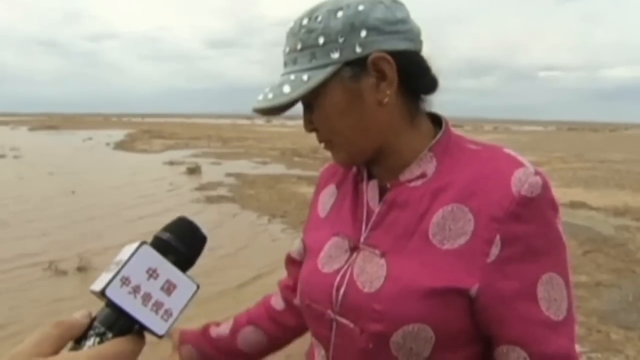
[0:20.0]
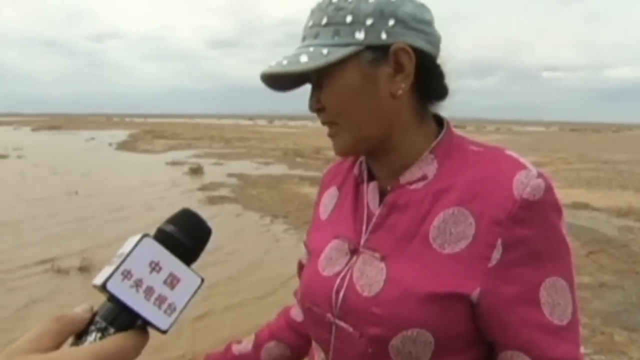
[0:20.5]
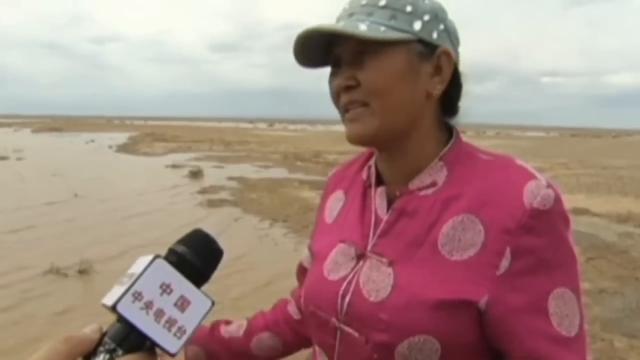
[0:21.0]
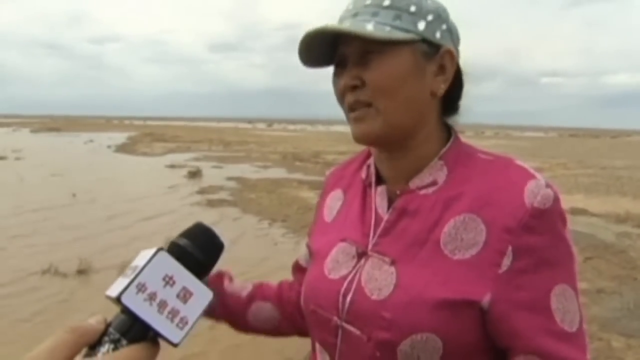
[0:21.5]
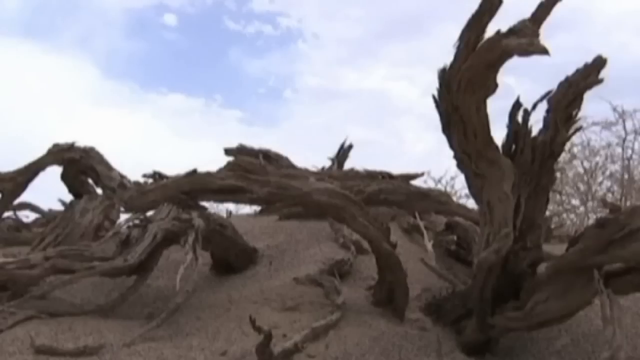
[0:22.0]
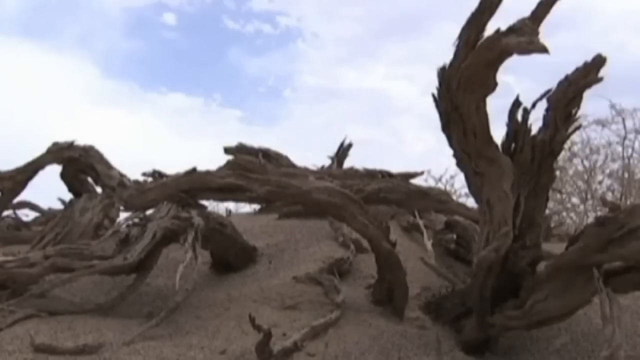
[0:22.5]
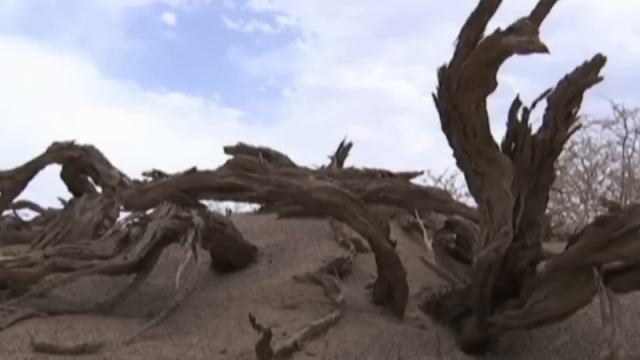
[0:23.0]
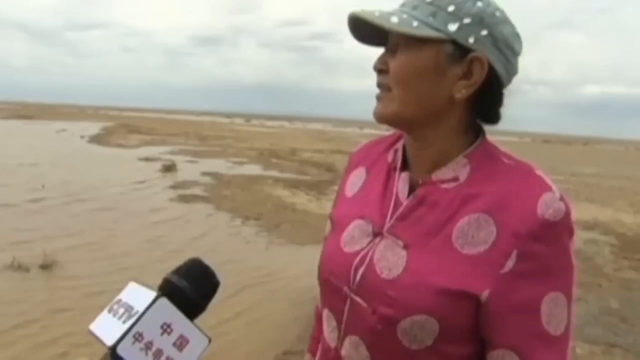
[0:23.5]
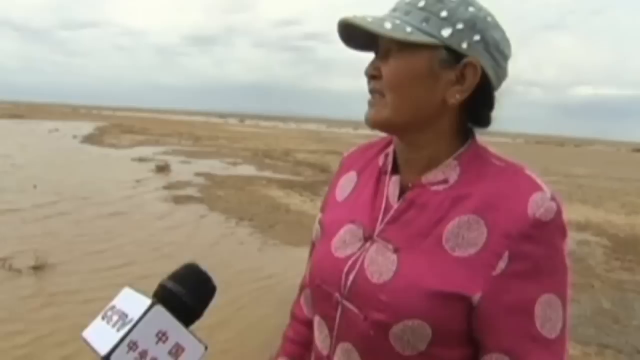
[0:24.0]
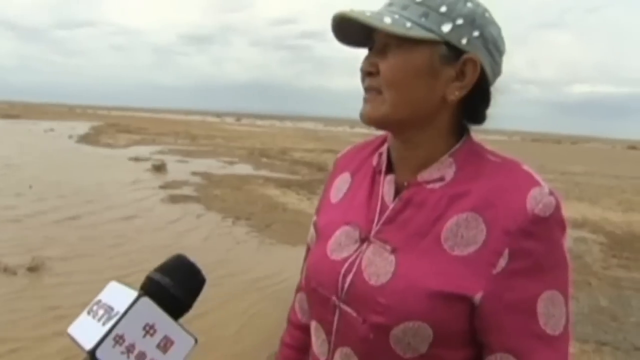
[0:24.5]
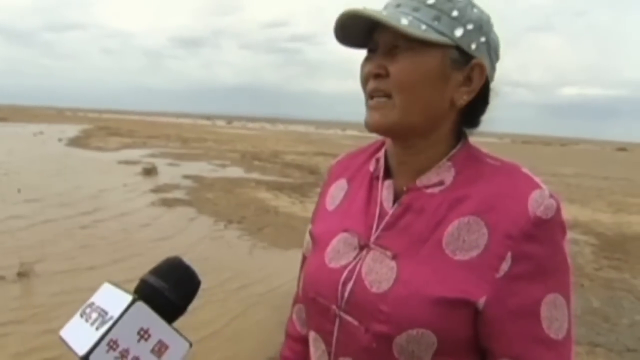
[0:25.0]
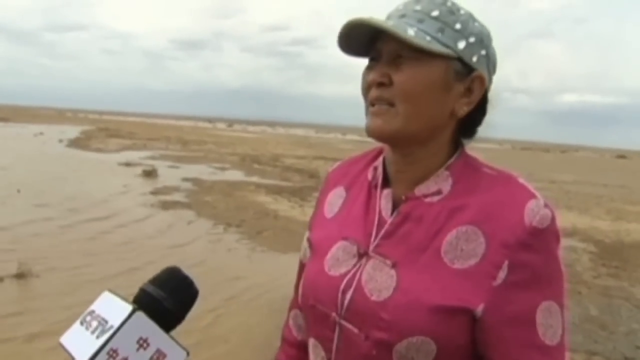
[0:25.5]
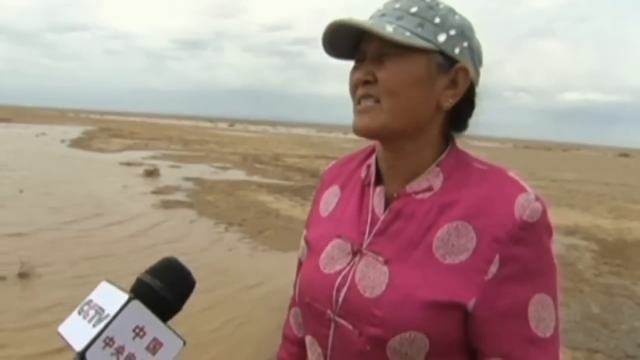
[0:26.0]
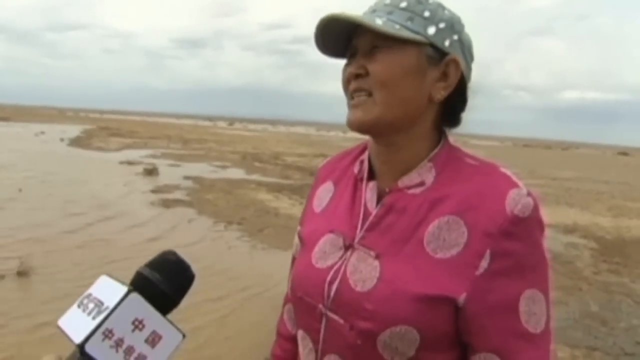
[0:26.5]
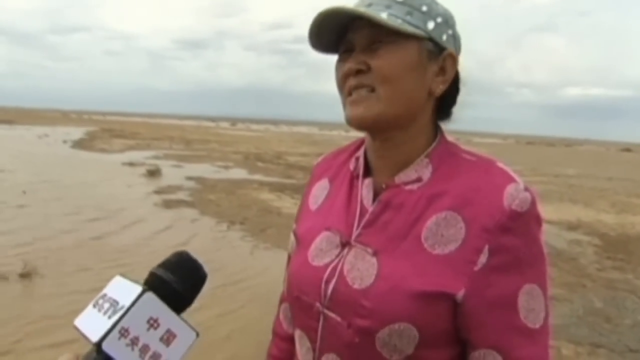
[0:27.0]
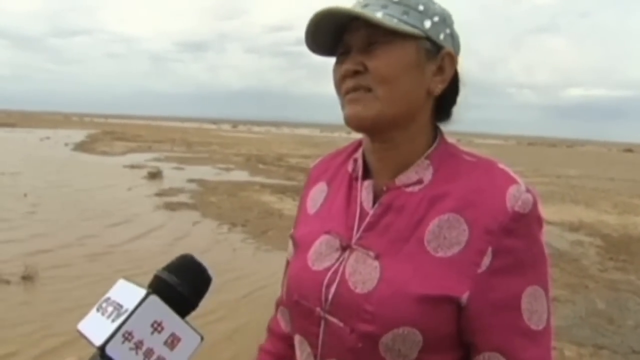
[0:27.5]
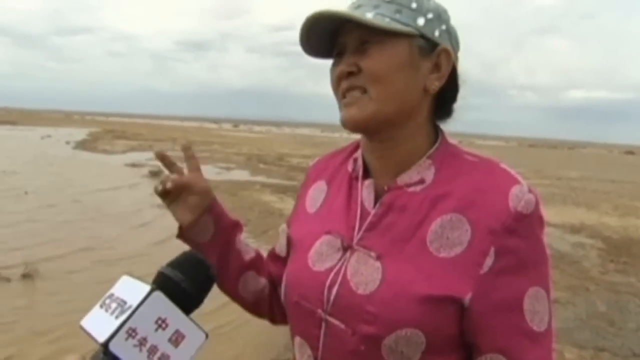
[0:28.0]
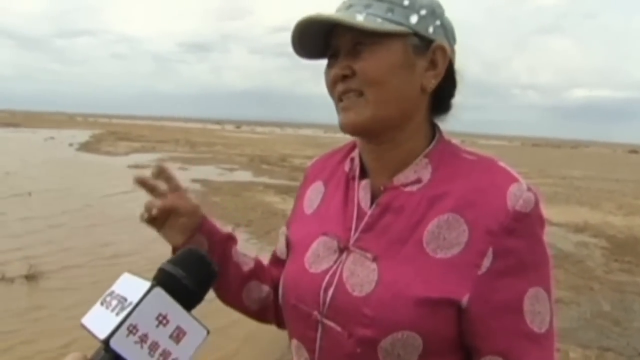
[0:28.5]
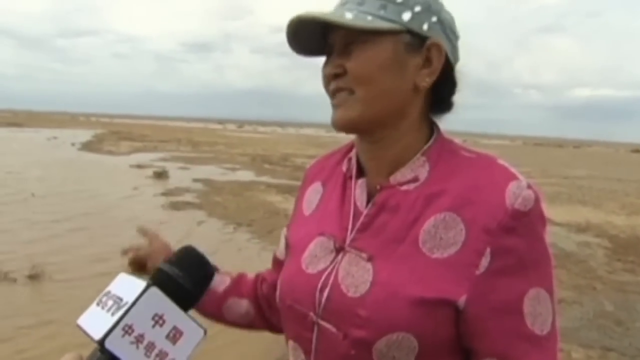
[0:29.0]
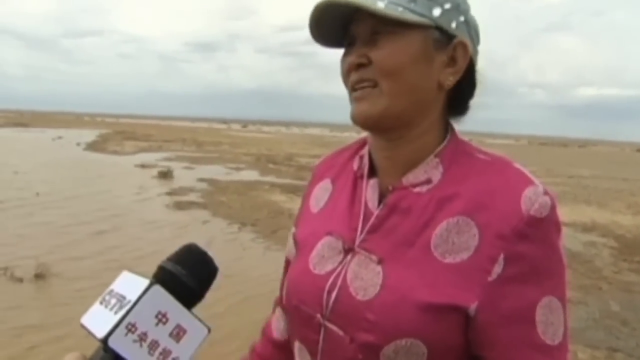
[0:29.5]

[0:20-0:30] A person is being interviewed: a woman, probably in her mid to late 30s, Asian, with dark hair, wearing a green hat with white designs and a red top with white designs. A microphone with Chinese symbols on it is on the viewer's left. The view then shows dried wood.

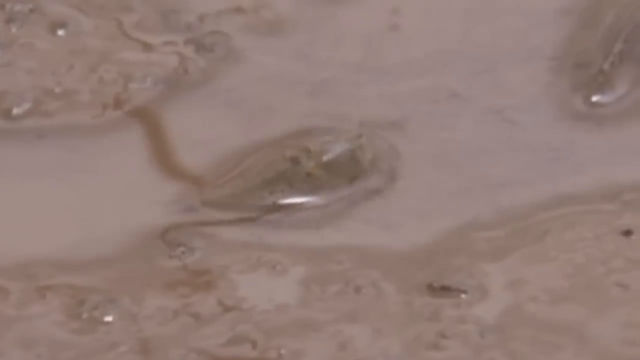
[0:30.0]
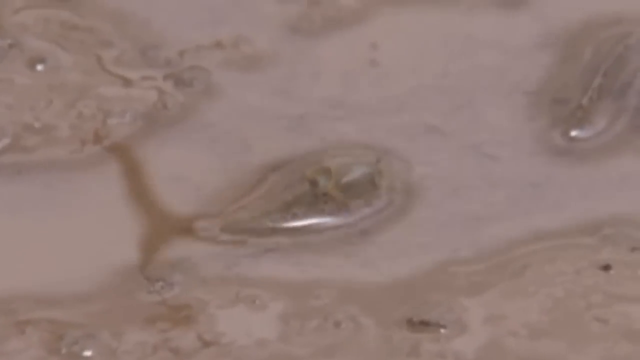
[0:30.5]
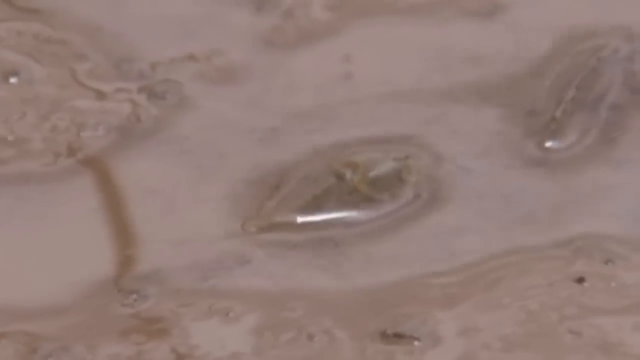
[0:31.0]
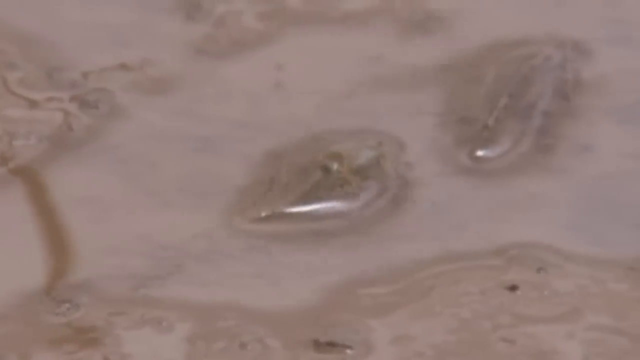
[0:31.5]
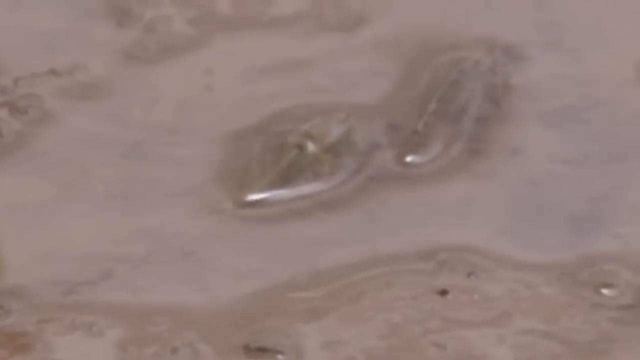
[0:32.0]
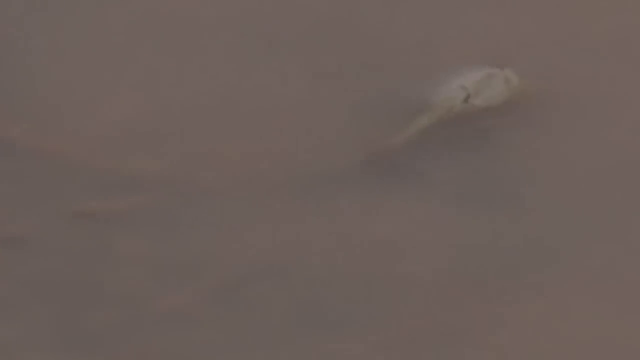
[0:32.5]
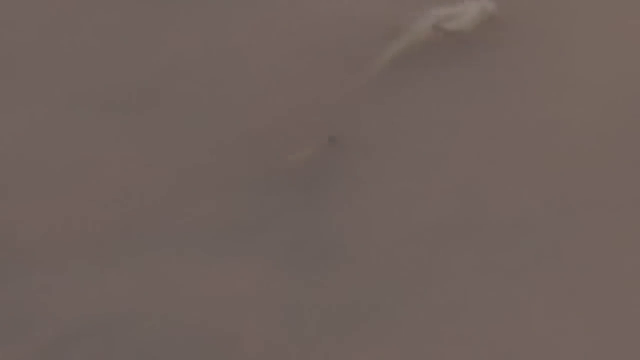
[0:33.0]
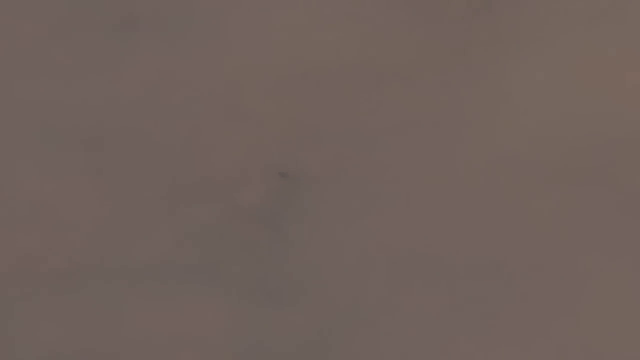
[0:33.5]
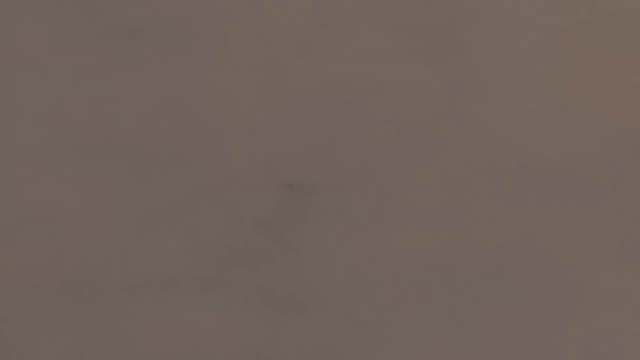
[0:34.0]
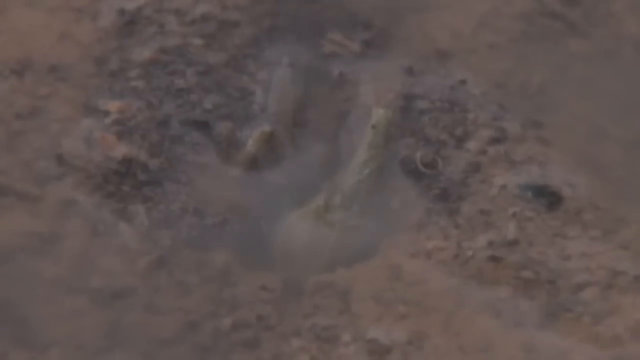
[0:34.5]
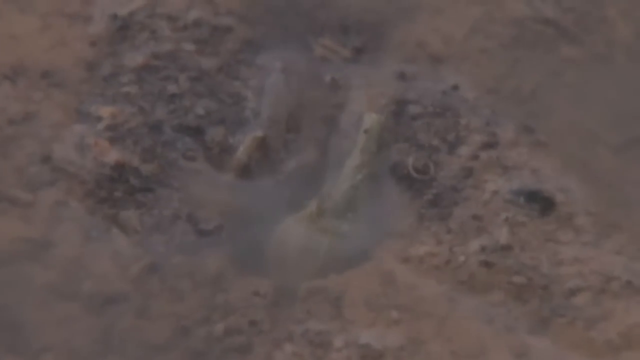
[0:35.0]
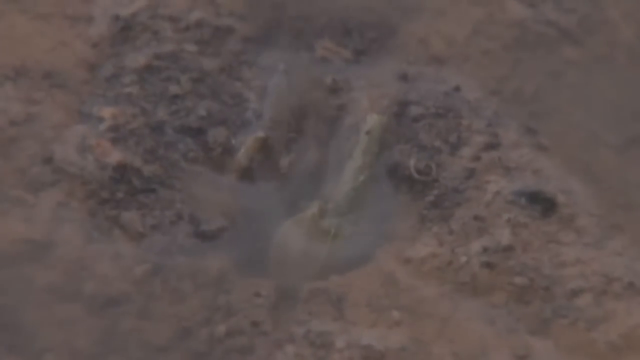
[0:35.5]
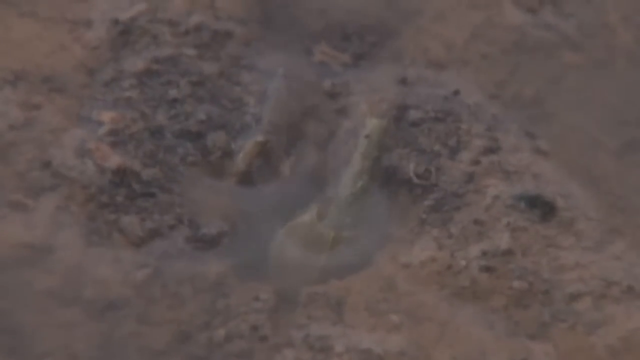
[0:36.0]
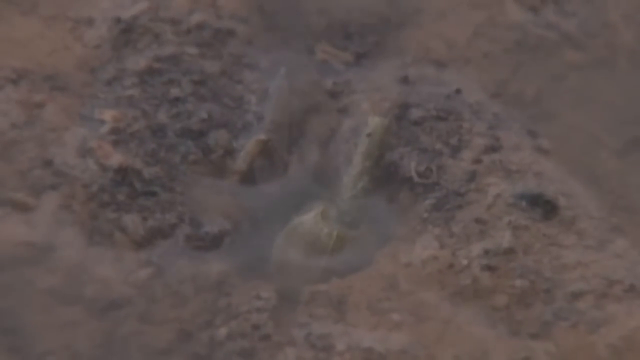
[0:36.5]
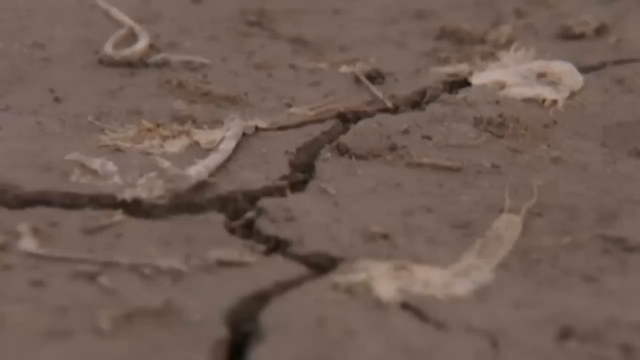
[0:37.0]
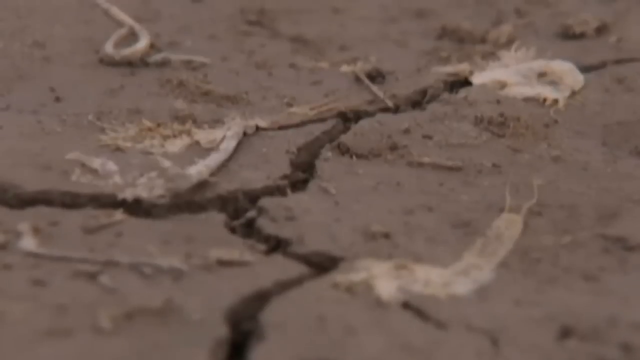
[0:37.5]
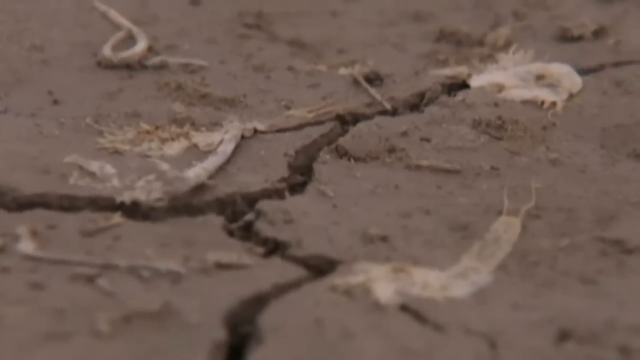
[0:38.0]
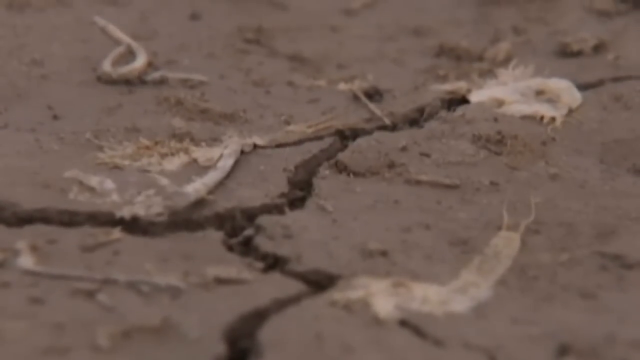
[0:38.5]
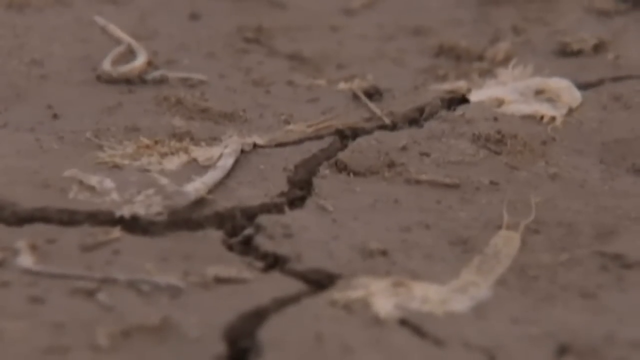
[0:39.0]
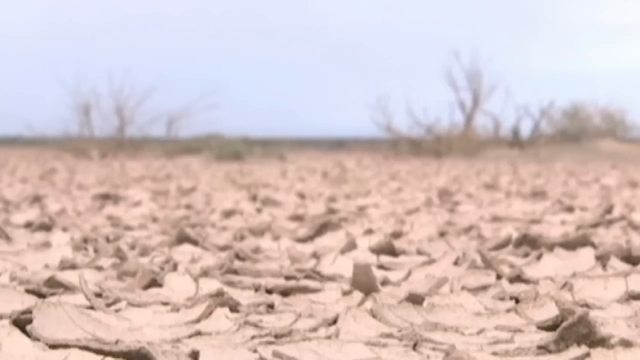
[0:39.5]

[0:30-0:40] In shallow water there is a little creature that looks like it has a head and a tail; it could be a tadpole, a gigantic one, with a tail, a big head and two eyes. The view then shows an area of dry, crusted mud baked by the sun.